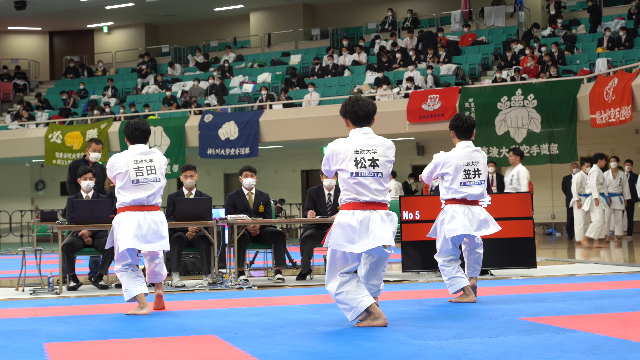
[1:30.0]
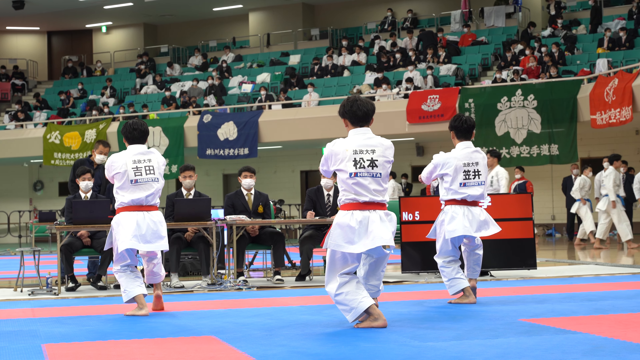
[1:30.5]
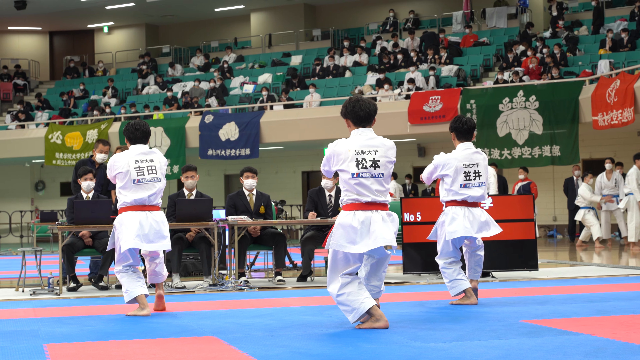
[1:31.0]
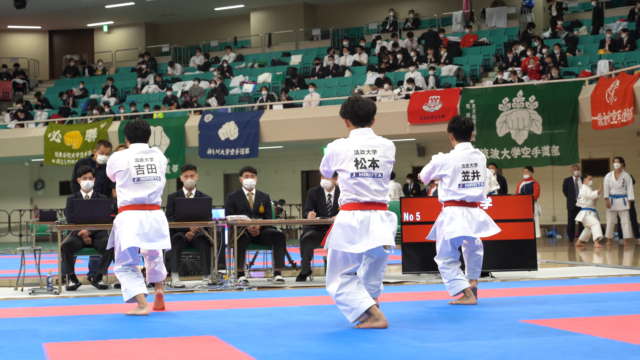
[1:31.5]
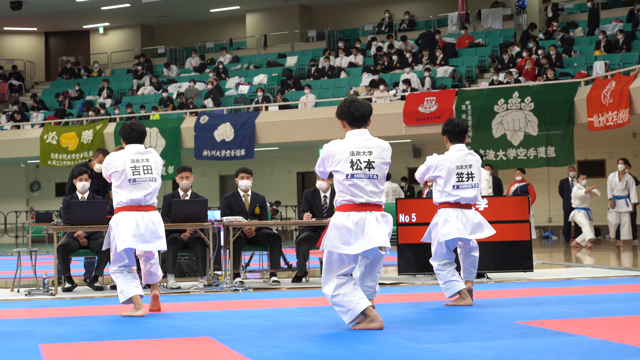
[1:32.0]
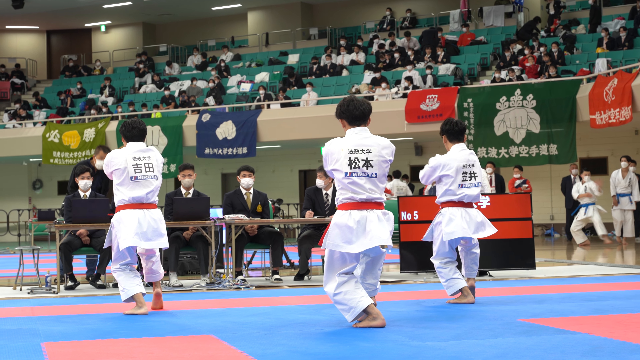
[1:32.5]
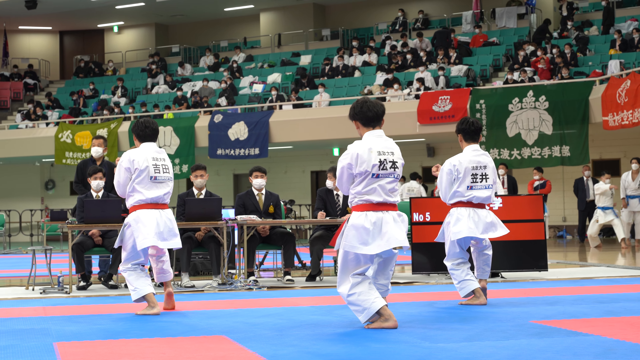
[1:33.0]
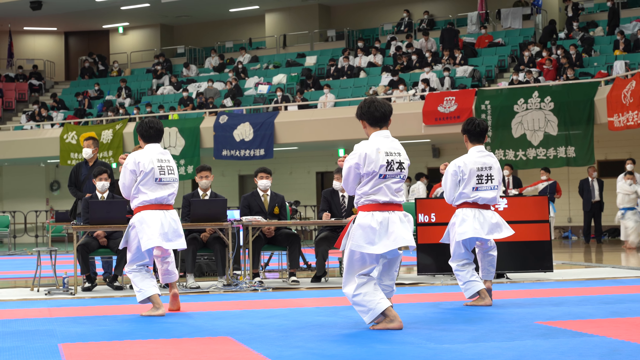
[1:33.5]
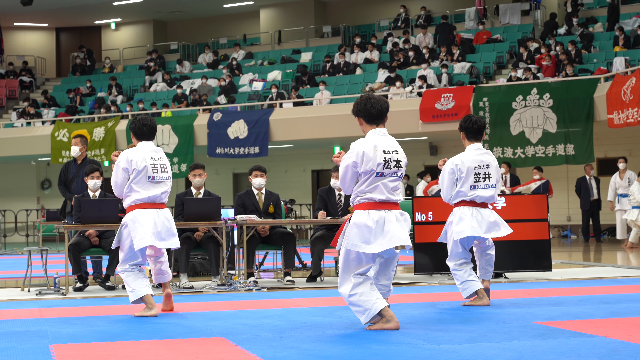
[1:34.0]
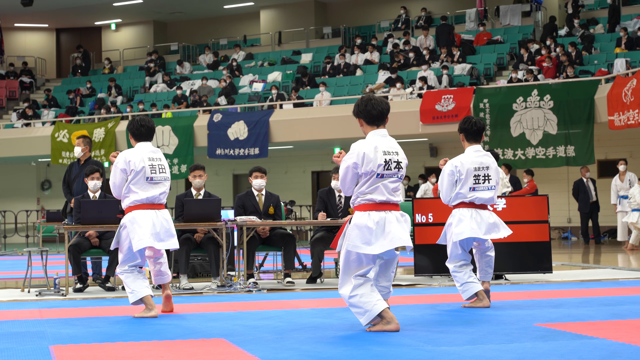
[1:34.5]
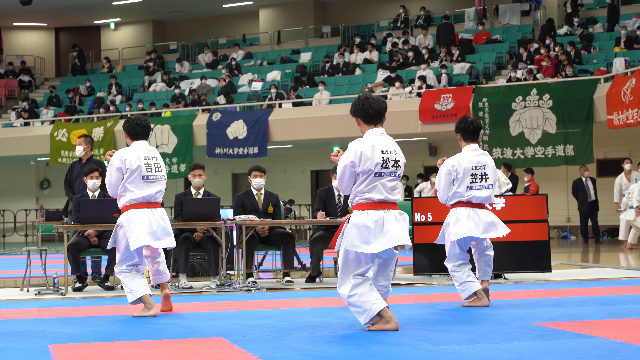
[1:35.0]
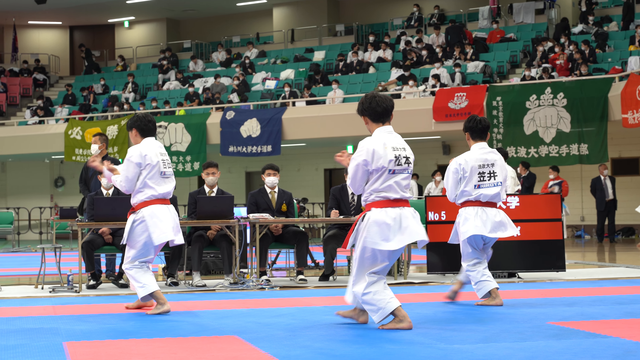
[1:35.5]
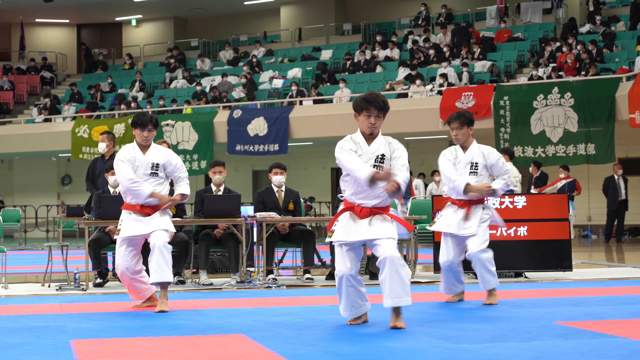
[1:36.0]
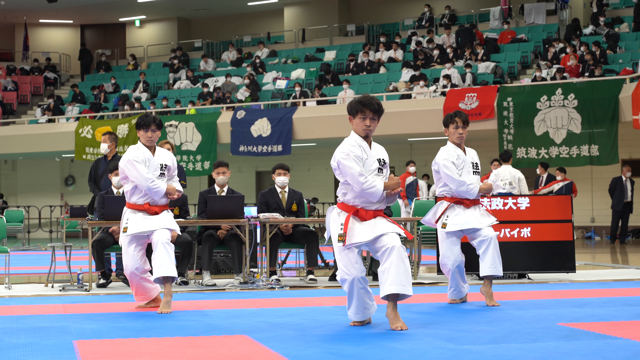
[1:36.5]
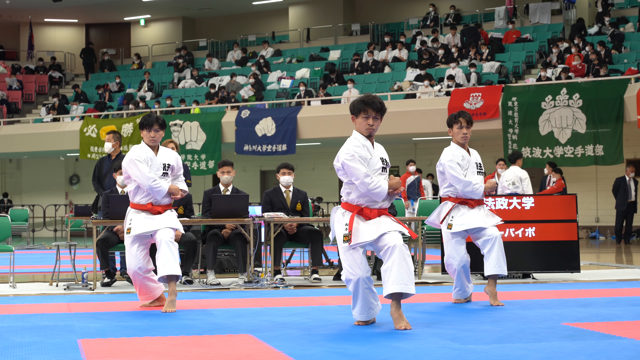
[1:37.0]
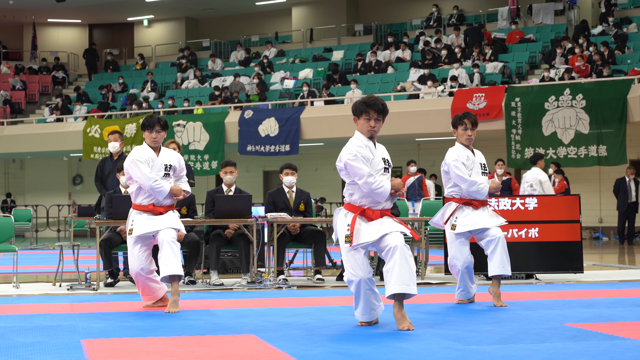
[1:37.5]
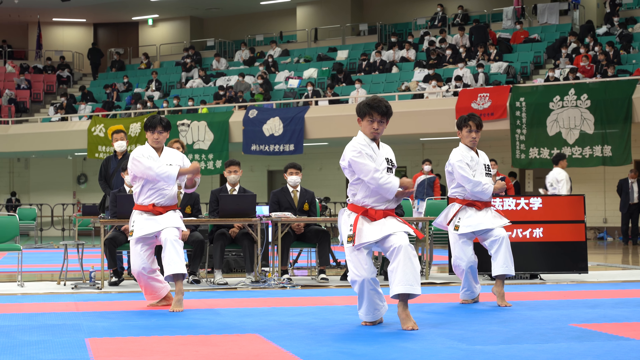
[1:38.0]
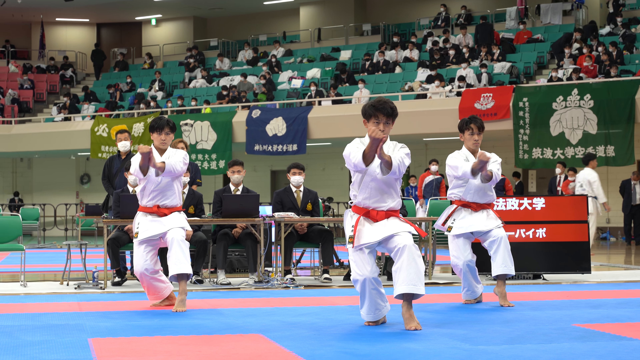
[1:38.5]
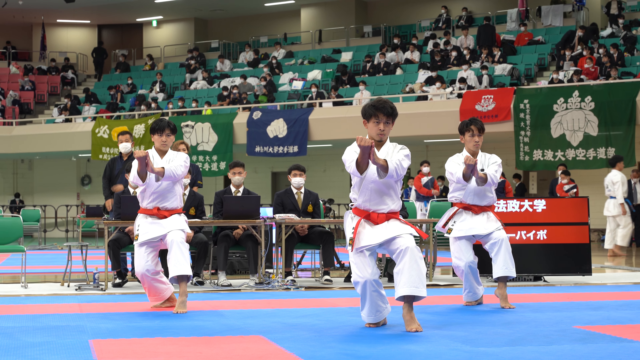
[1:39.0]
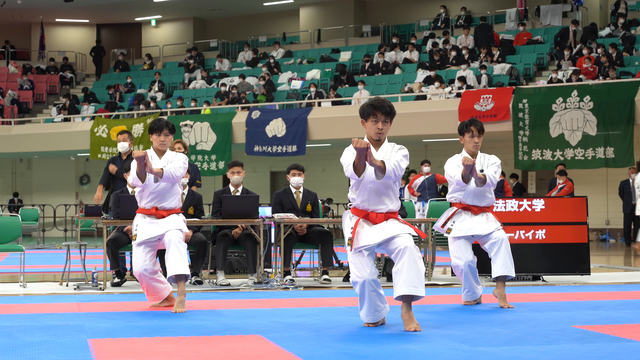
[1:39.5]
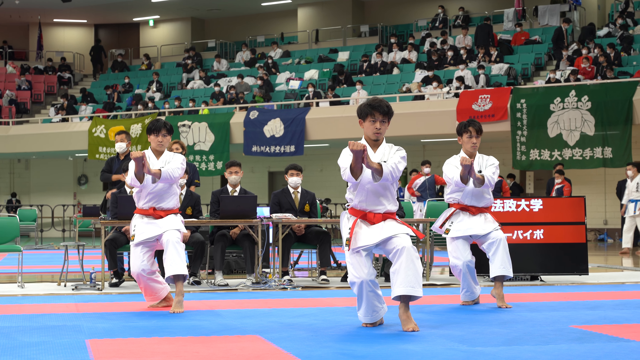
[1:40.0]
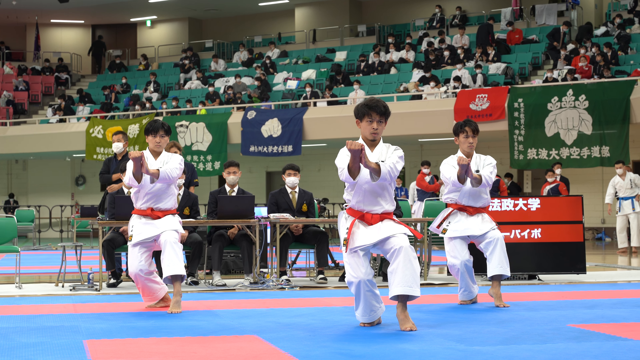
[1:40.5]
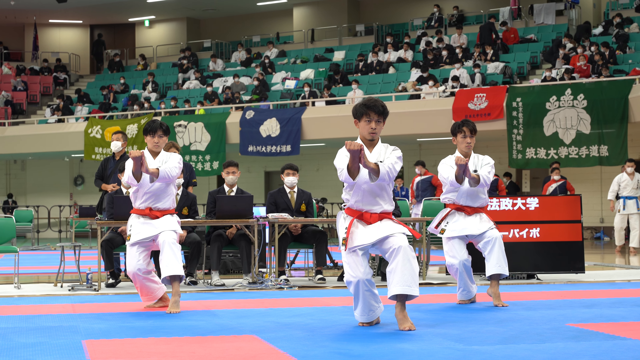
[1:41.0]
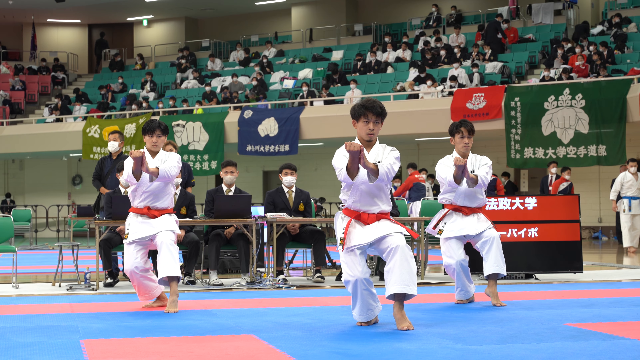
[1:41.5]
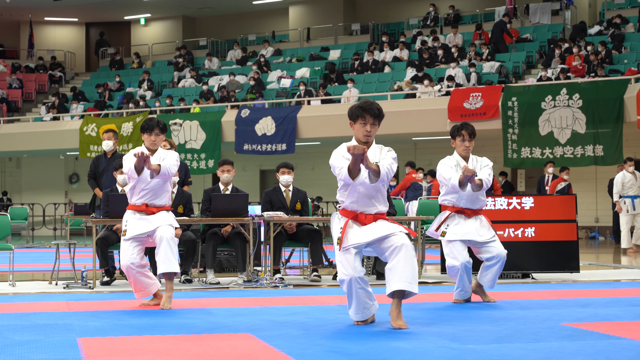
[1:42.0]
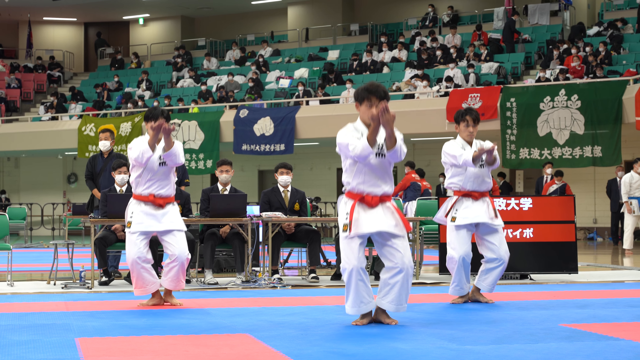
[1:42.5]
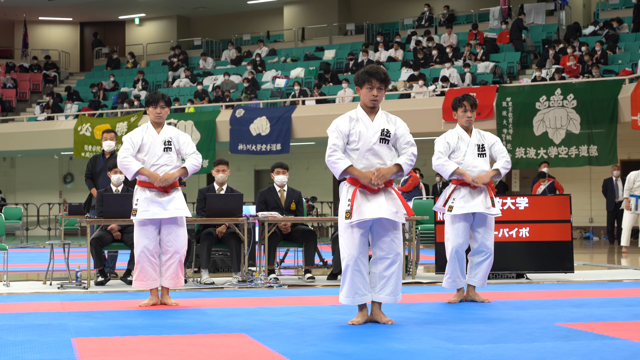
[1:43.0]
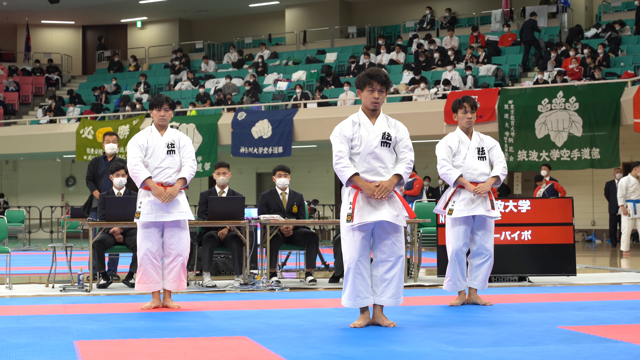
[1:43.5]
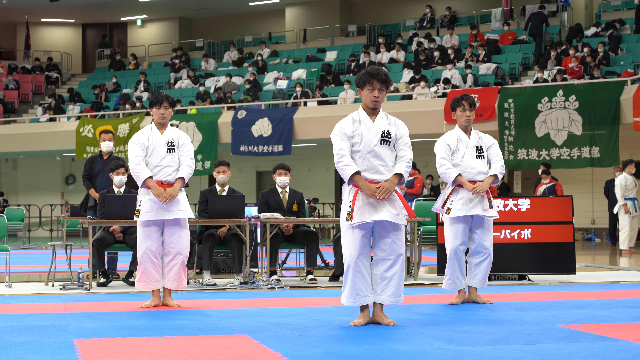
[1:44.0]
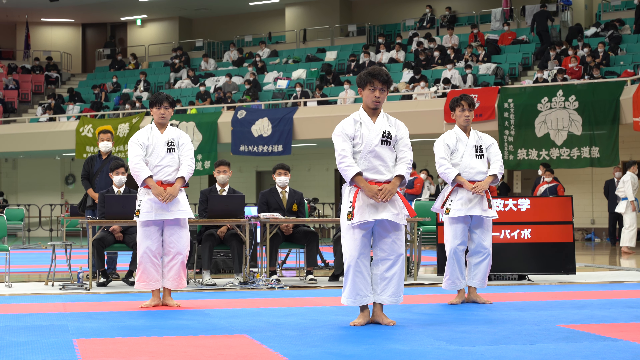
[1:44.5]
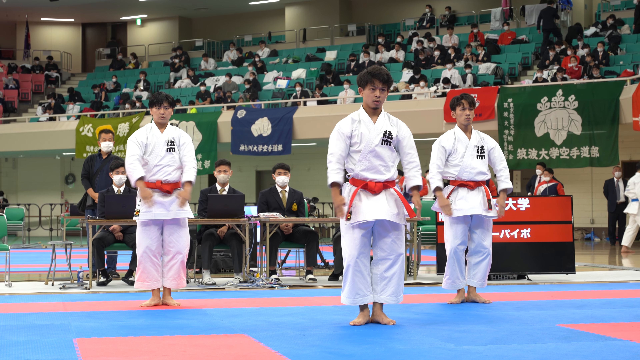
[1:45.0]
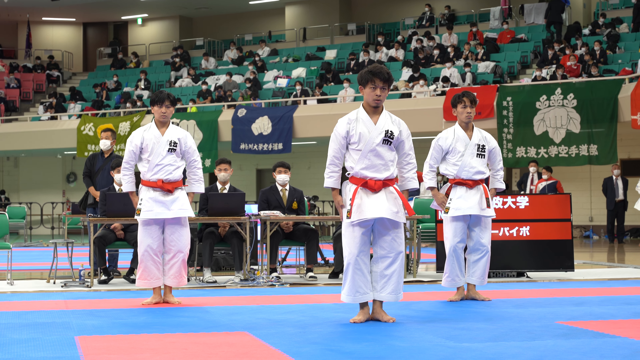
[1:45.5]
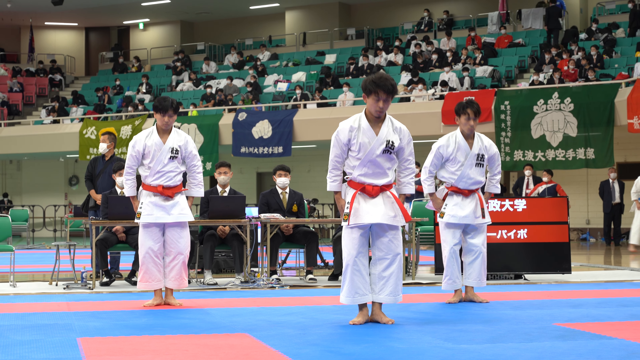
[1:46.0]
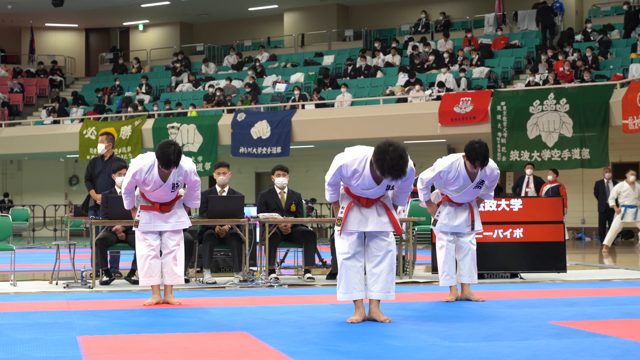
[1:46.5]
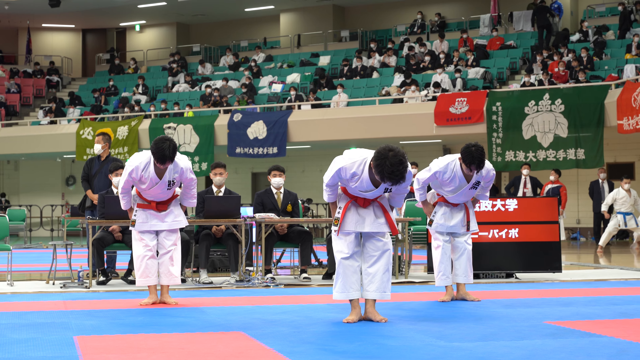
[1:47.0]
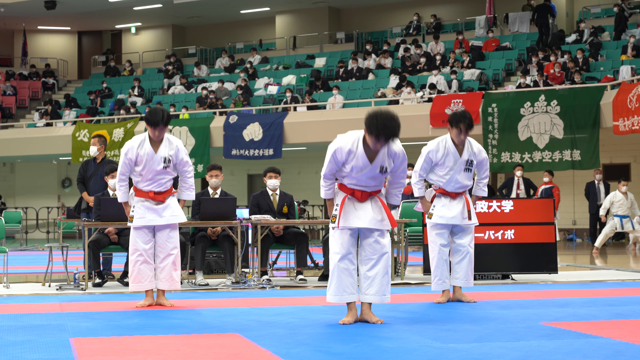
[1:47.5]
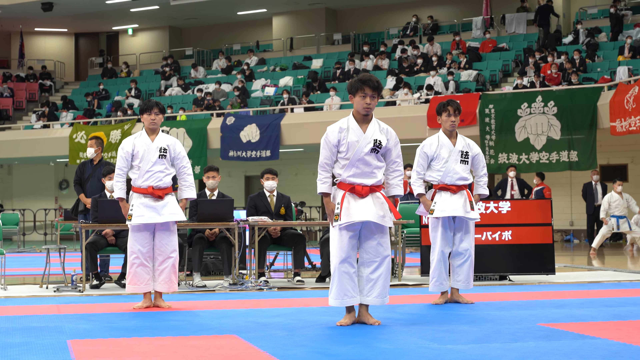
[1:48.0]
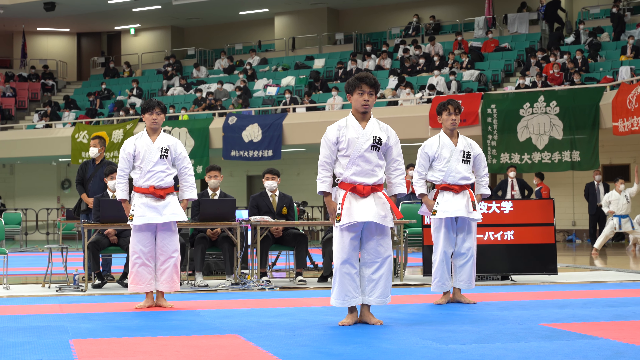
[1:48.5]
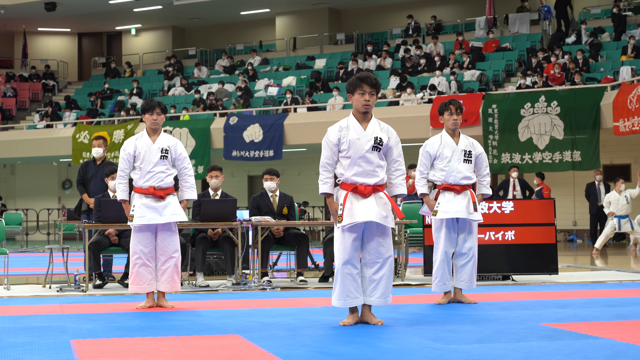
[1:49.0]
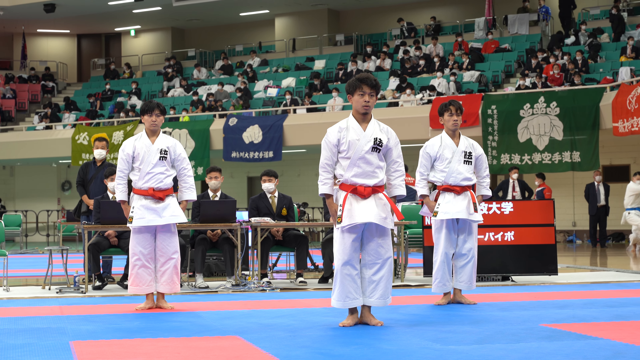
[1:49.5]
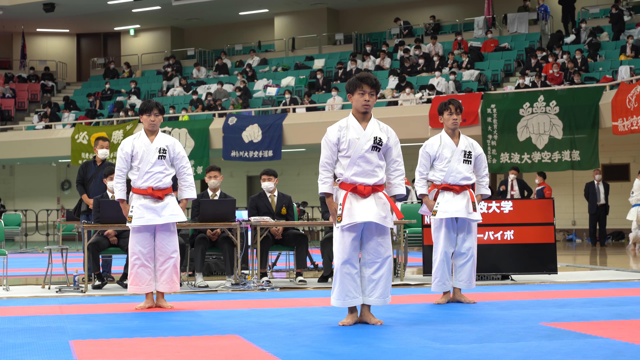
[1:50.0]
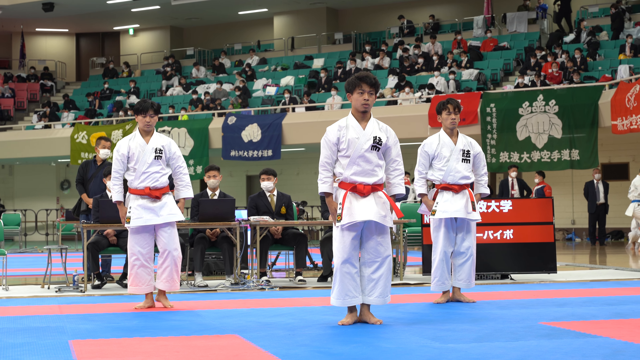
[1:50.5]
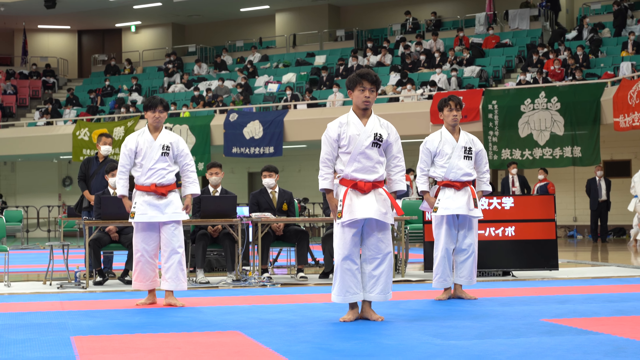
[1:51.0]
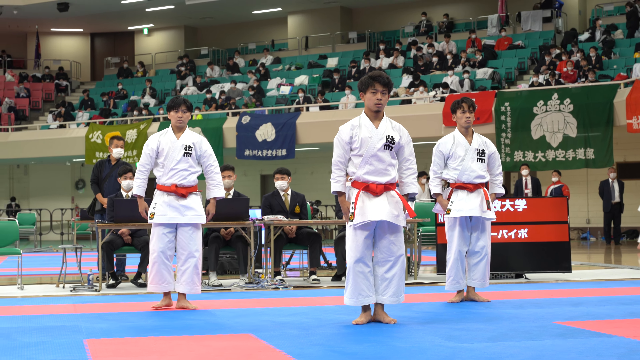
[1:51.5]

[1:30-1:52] The men hold a lunge position with straight, fisted arms in front of them and stay still for several beats before doing a pivot turn to face the camera. Still crouched, they move forward with legs bent. Their arms come bent to one side of their bodies, then straighten as they are brought to the center and a bit over to the right, forming a diagonal line of arms and hands. Together they slide their hands and arms back to center, straight down, with hands clasped in front of them, and straighten their legs into an upright, rigid position. All three men then bow in unison, hands at their sides and arms perfectly straight. Their expressions are solemn and they do not smile. Some type of Japanese writing is on the backs of their uniforms.